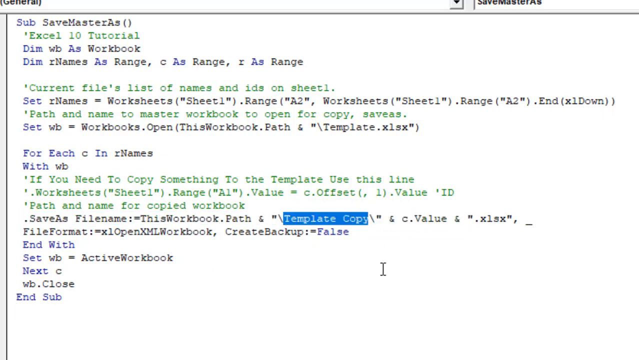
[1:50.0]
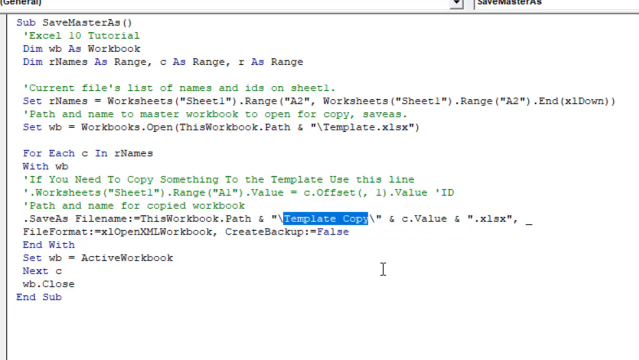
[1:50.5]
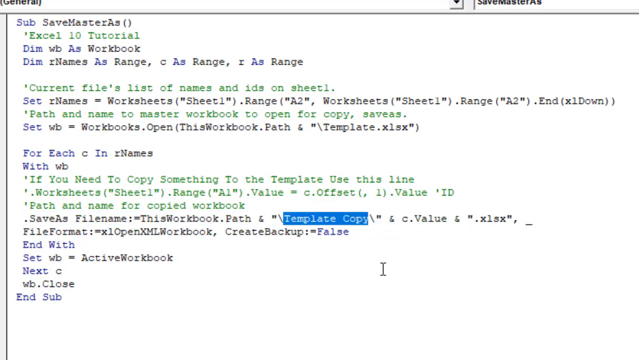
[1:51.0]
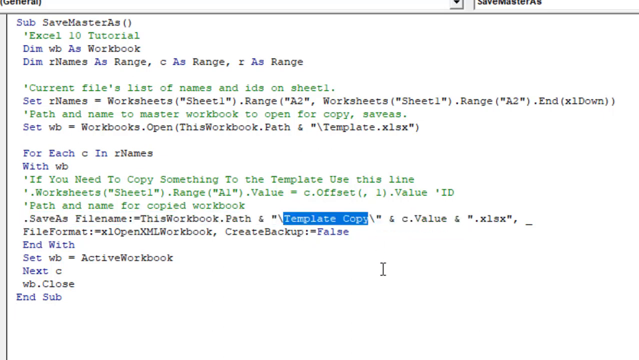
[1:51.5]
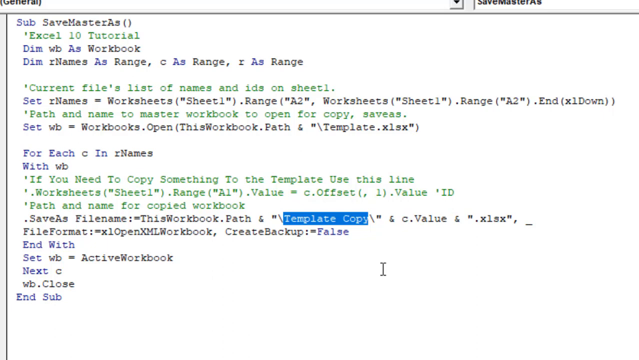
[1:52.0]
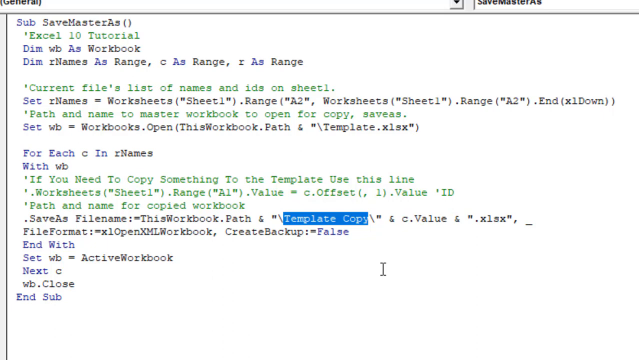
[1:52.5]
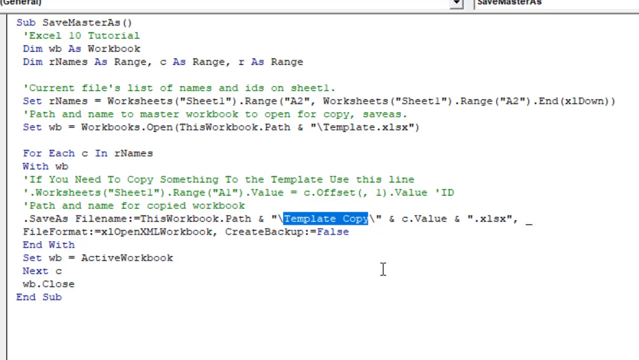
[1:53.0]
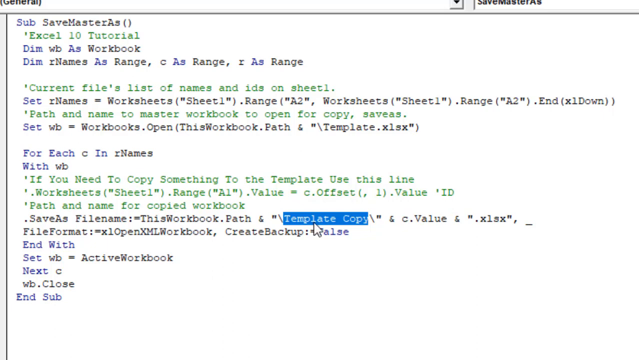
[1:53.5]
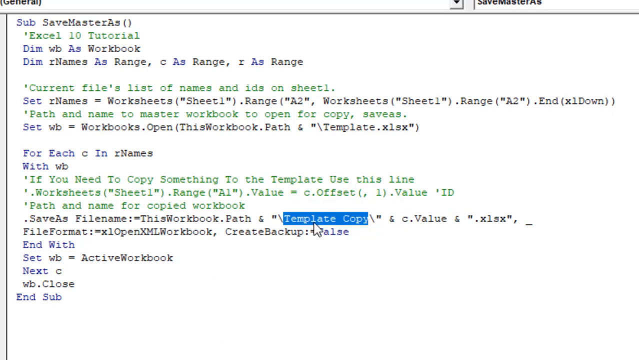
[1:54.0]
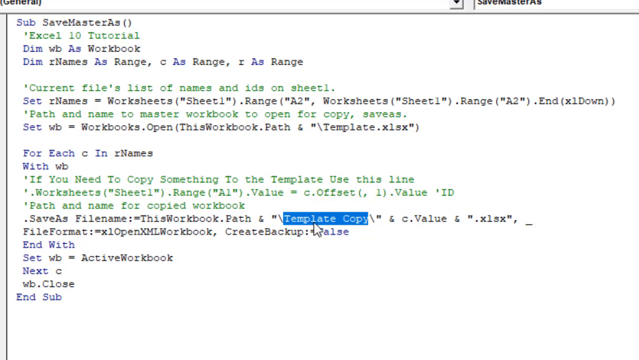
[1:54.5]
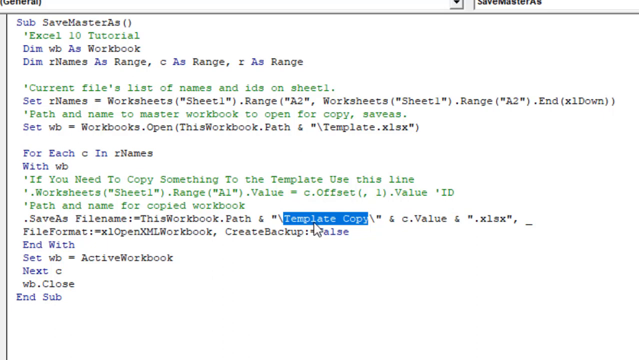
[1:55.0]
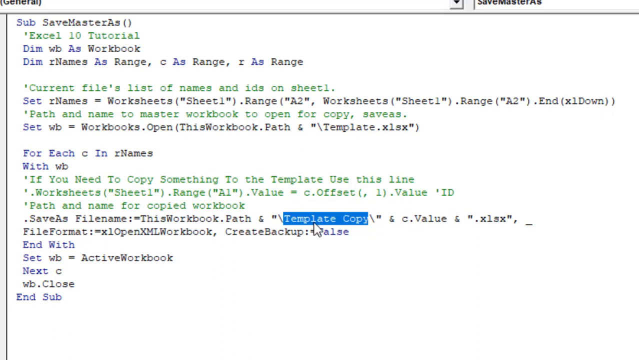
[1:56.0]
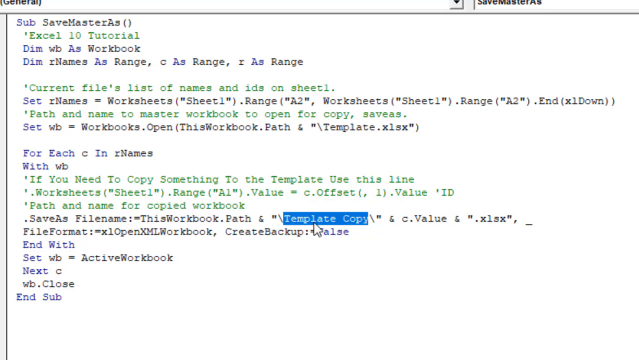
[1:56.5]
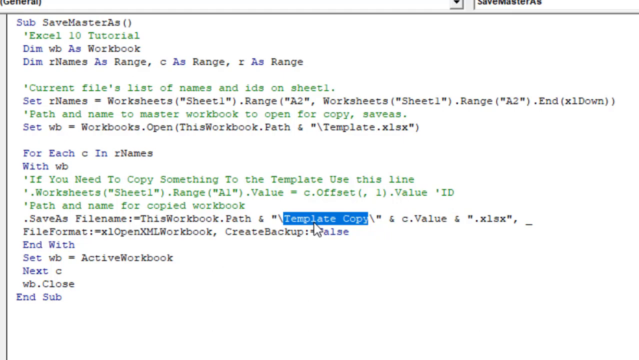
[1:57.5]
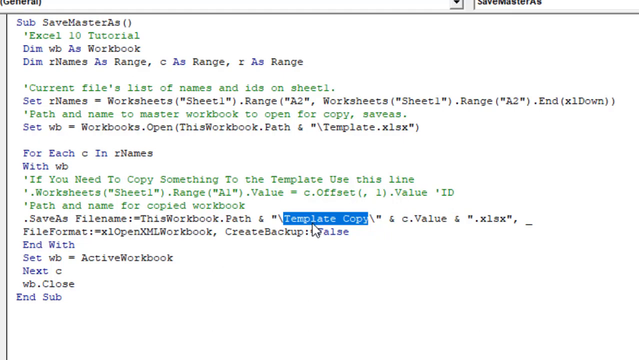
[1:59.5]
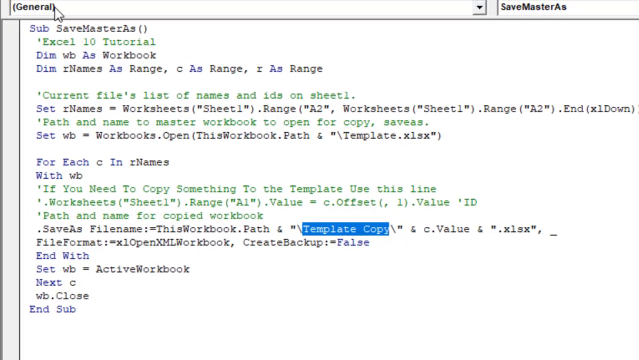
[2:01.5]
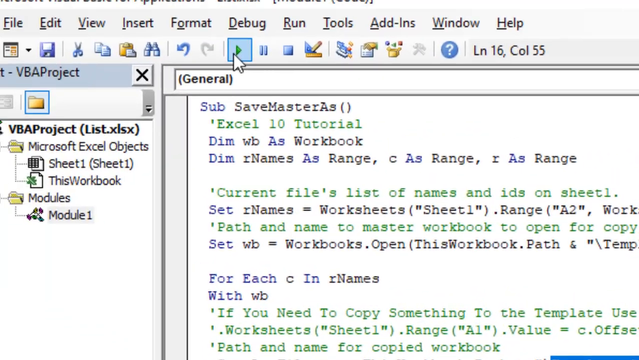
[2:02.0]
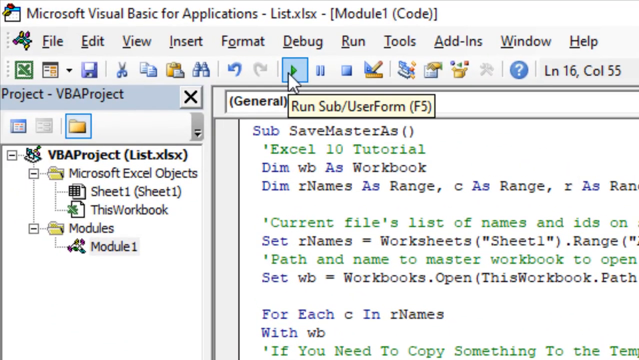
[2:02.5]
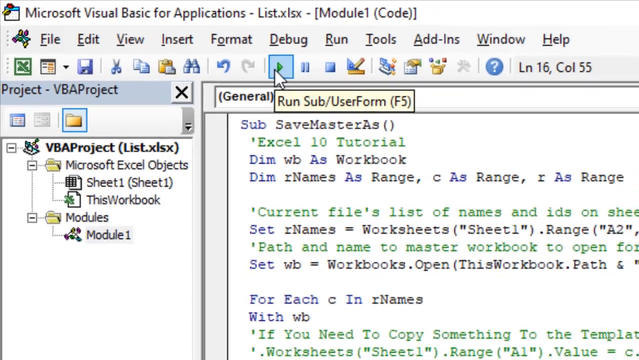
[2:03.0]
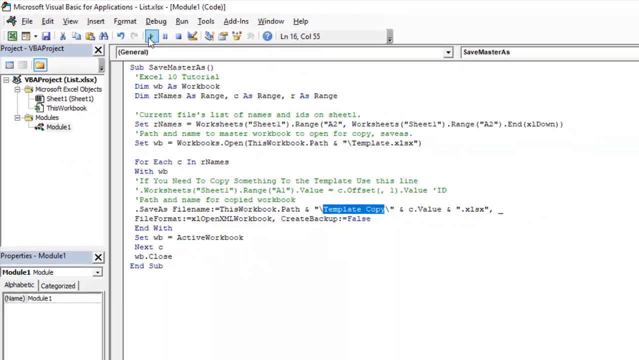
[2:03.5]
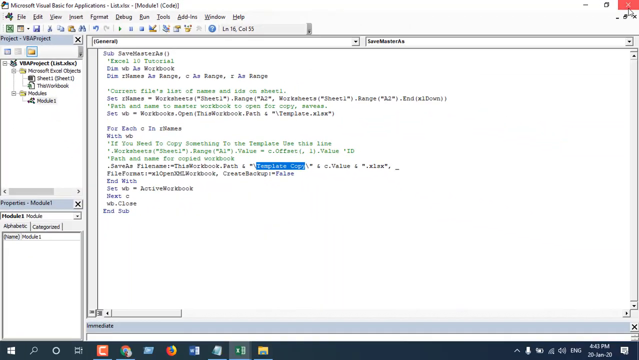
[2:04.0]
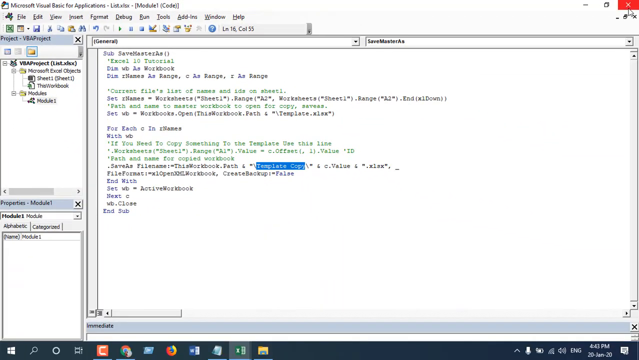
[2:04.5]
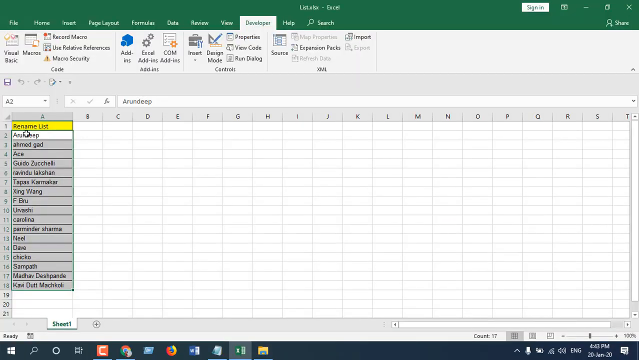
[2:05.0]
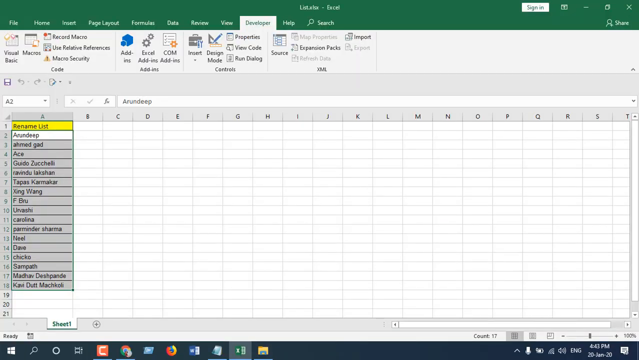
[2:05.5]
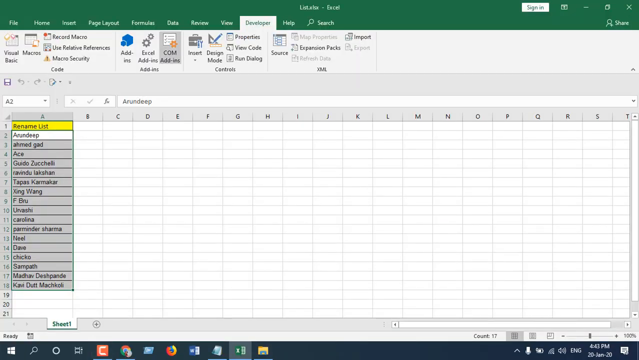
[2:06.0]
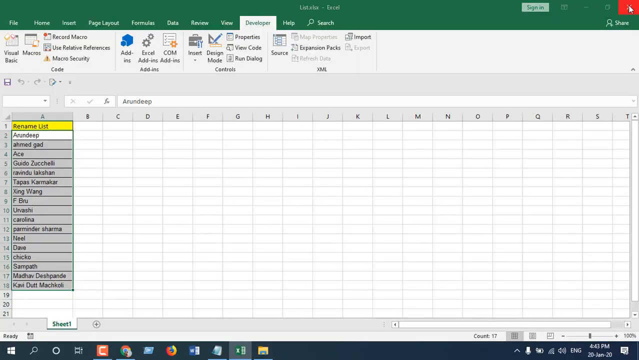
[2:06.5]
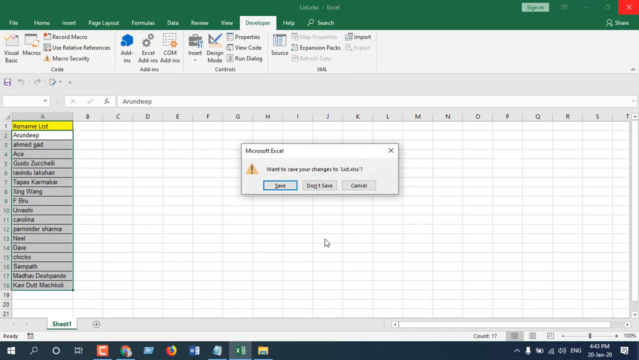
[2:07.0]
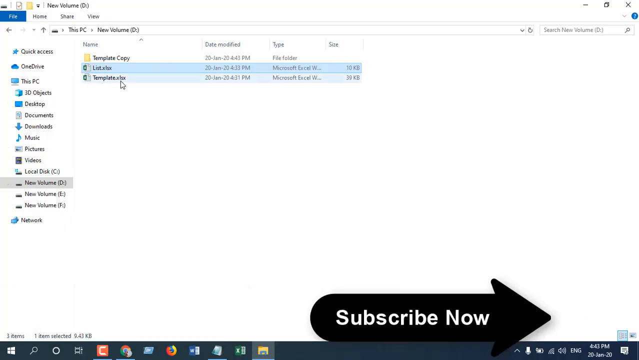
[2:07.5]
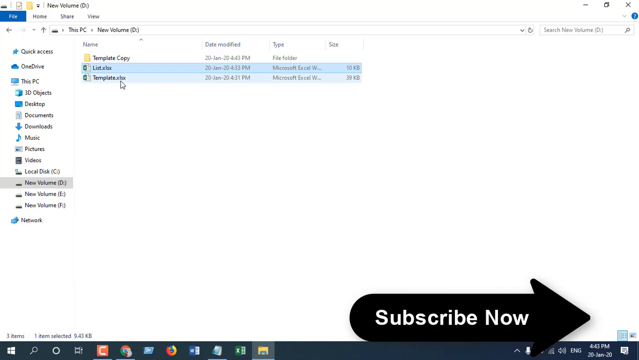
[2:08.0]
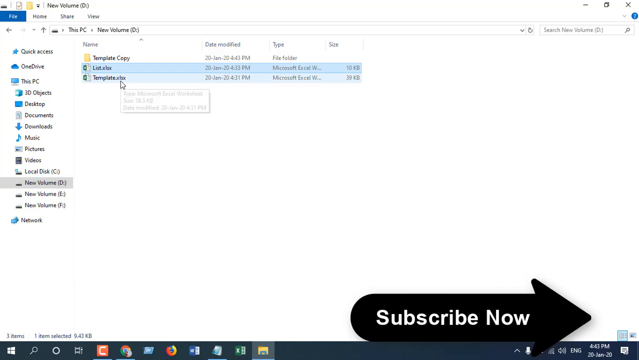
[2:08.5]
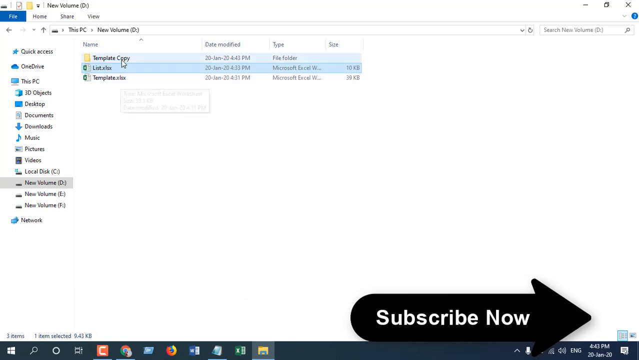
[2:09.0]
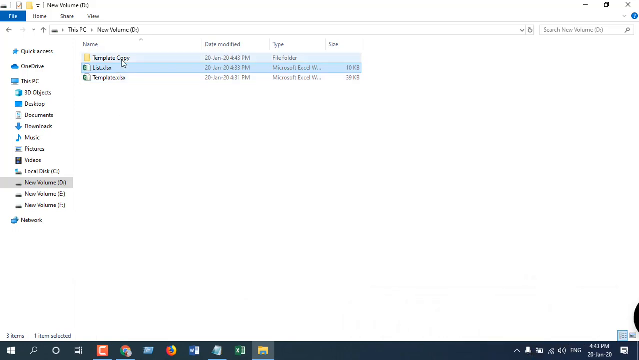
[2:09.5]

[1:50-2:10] A highlighted row of code contains ".saveas filename" referring to this workbook's path and template copy, with template copy highlighted. Further code includes "create backup equals false", "wb close" and "end sub". The view zooms into a toolbar option: a highlighted green arrow pointing right, labeled "run sub/user form (F5)". The person clicks it, then exits the workbook and answers a prompt about saving. Another subscribe button appears, with a black arrow pointing right and white text. The view then goes back to template copy and opens it, showing many different files in the folder.